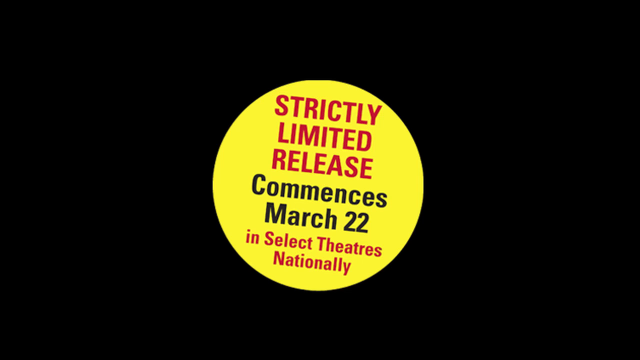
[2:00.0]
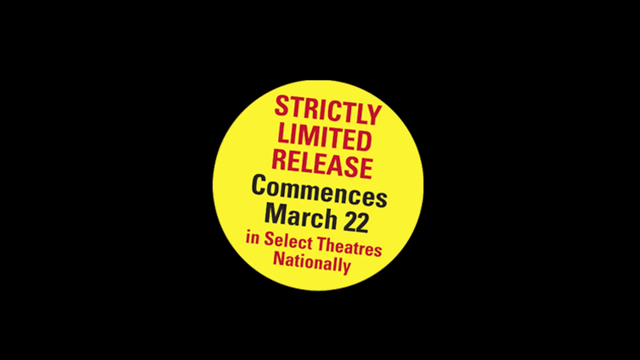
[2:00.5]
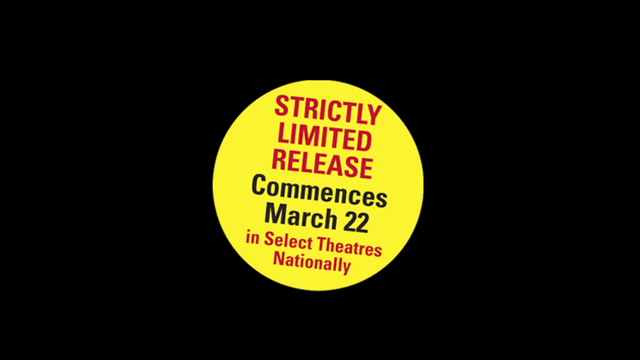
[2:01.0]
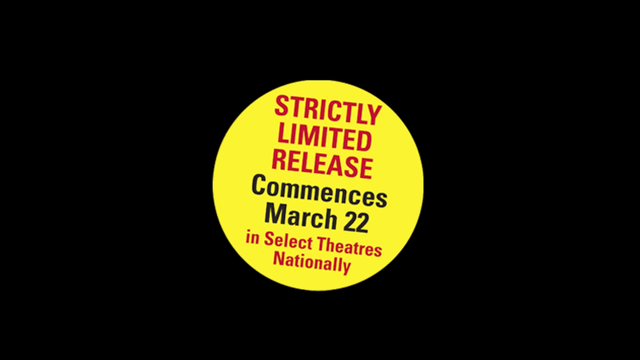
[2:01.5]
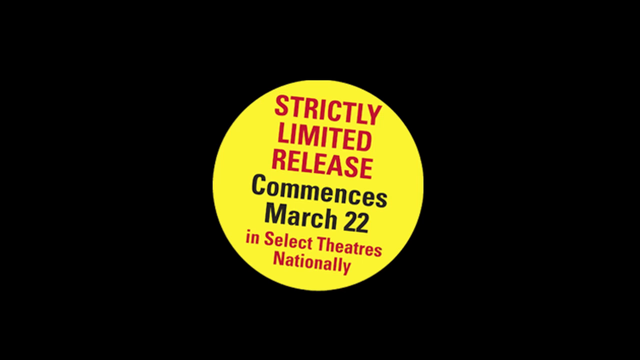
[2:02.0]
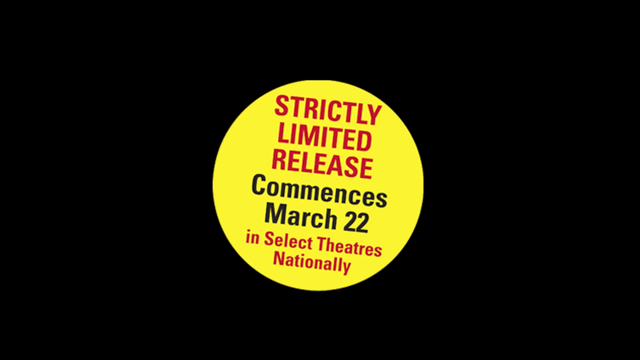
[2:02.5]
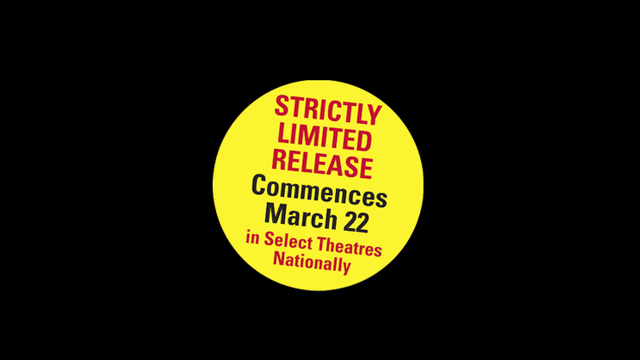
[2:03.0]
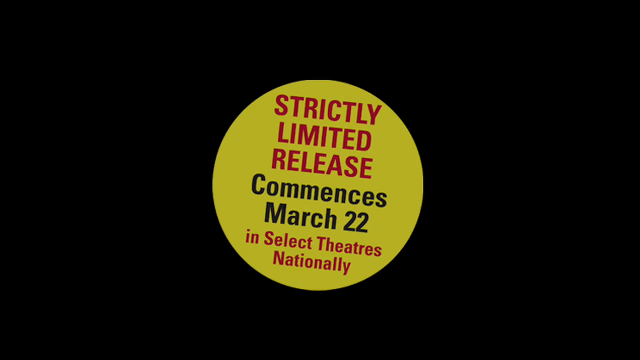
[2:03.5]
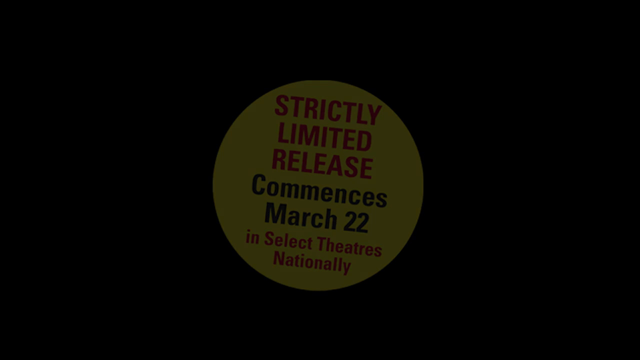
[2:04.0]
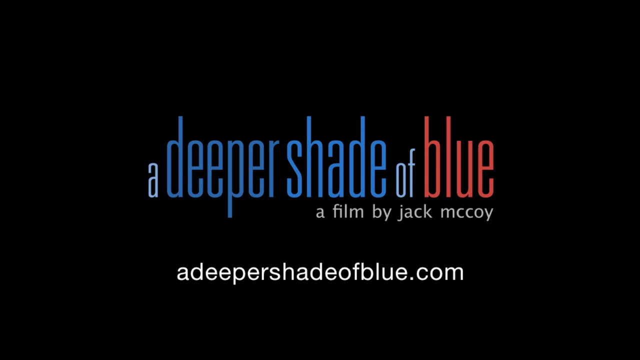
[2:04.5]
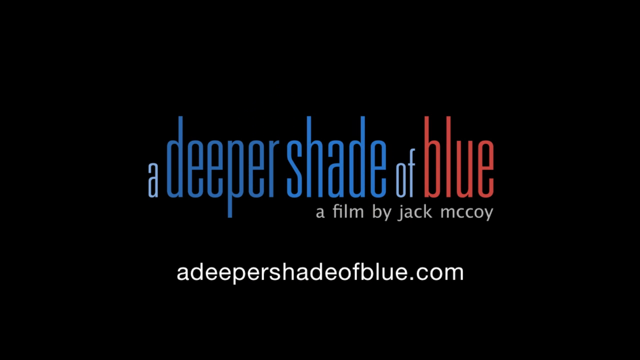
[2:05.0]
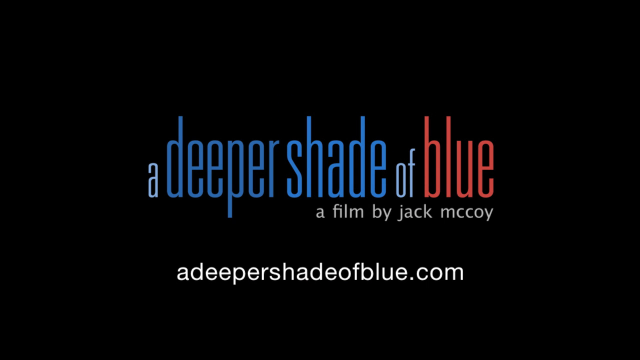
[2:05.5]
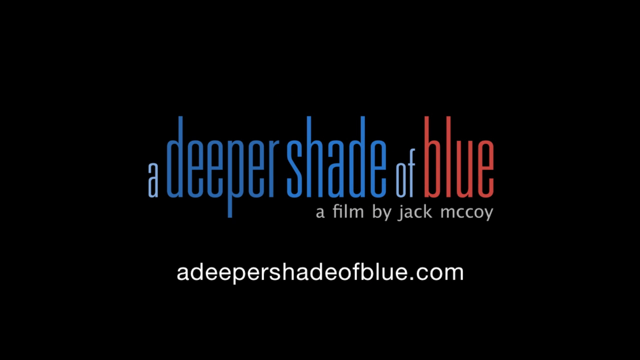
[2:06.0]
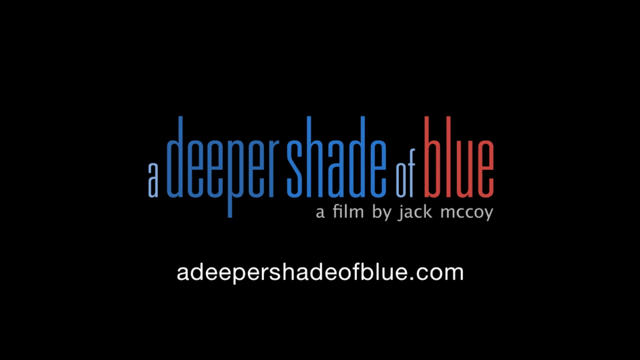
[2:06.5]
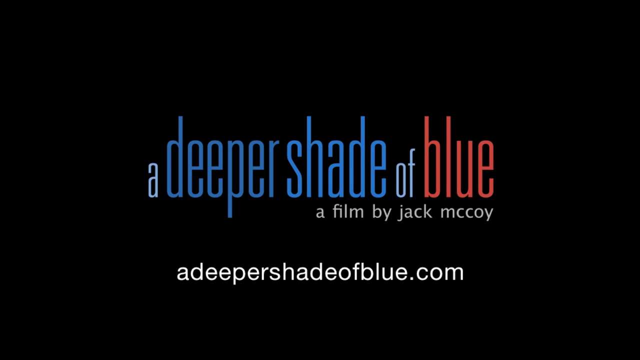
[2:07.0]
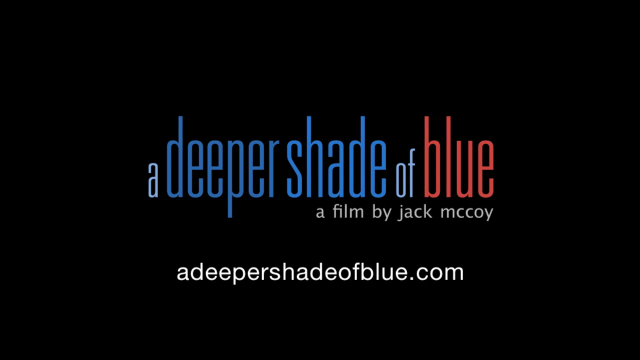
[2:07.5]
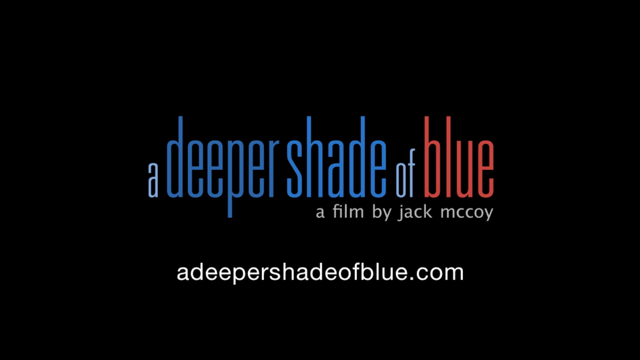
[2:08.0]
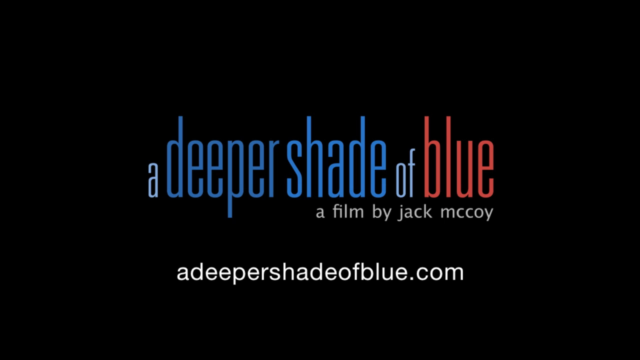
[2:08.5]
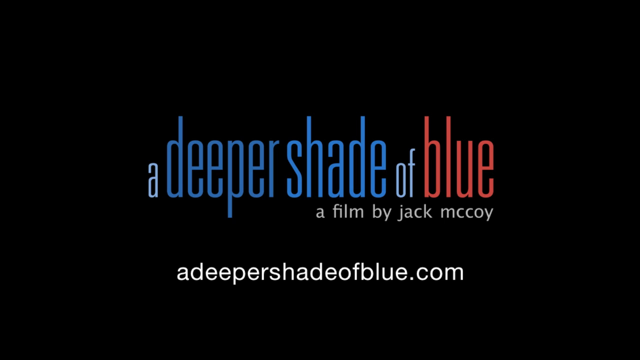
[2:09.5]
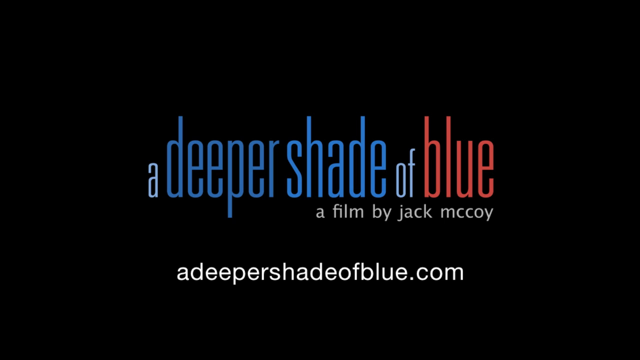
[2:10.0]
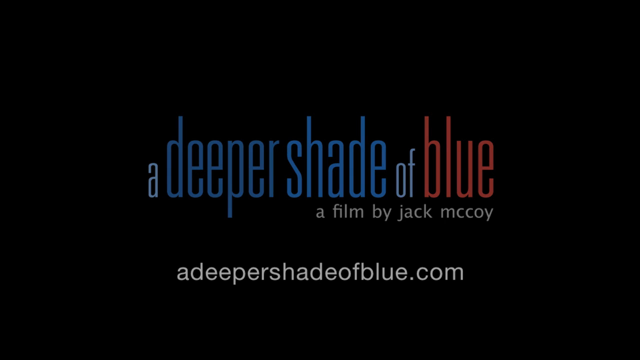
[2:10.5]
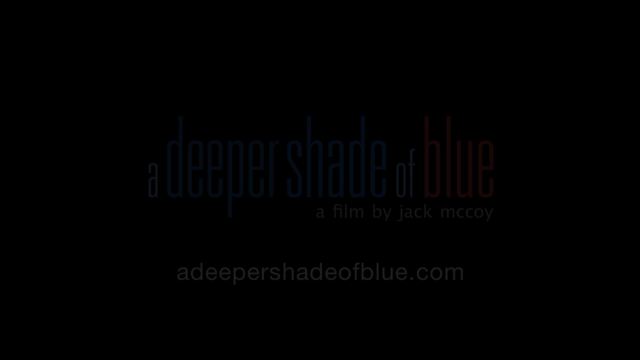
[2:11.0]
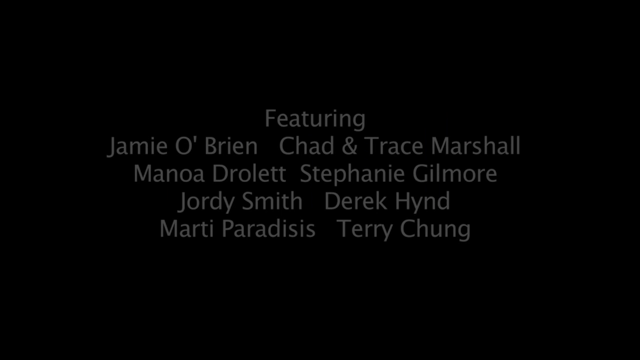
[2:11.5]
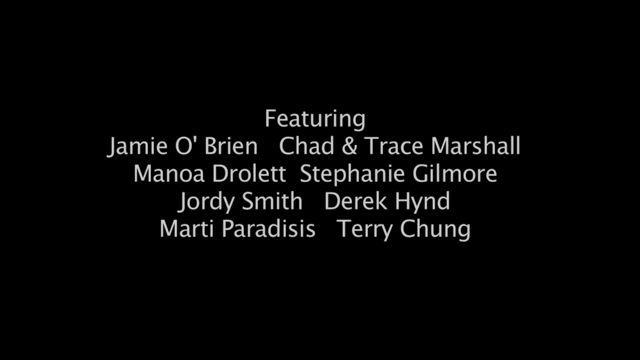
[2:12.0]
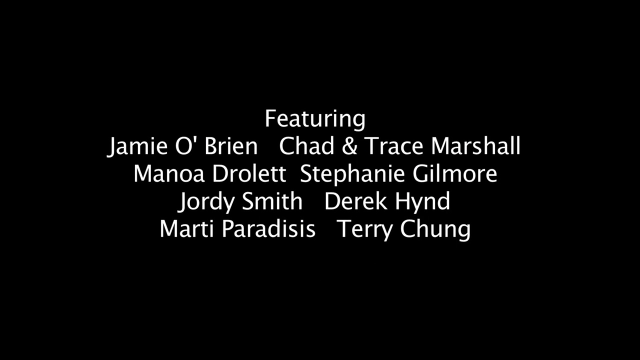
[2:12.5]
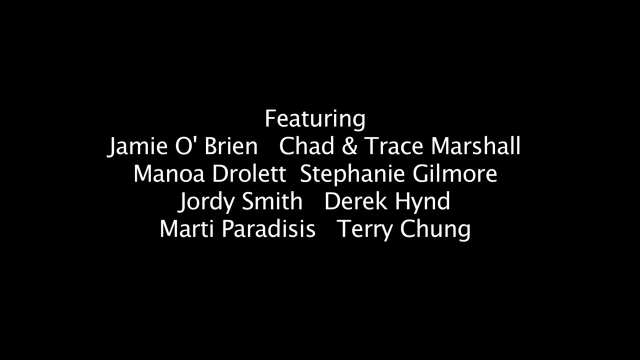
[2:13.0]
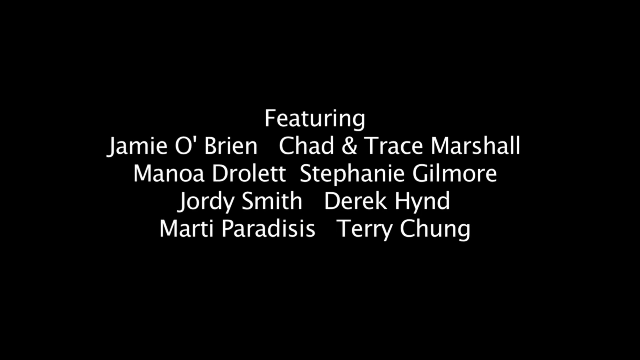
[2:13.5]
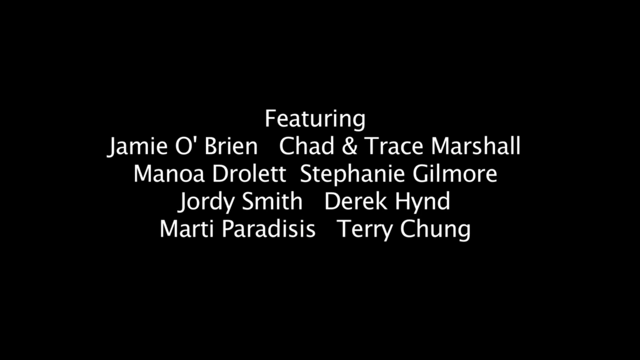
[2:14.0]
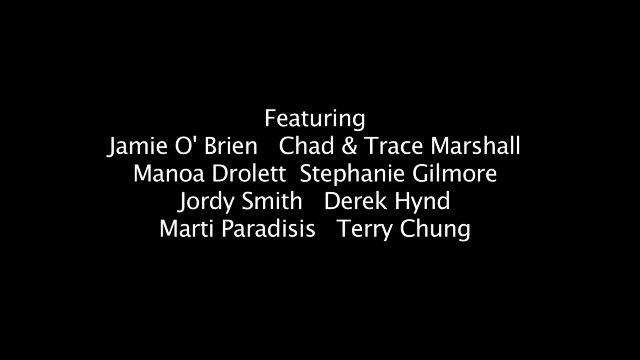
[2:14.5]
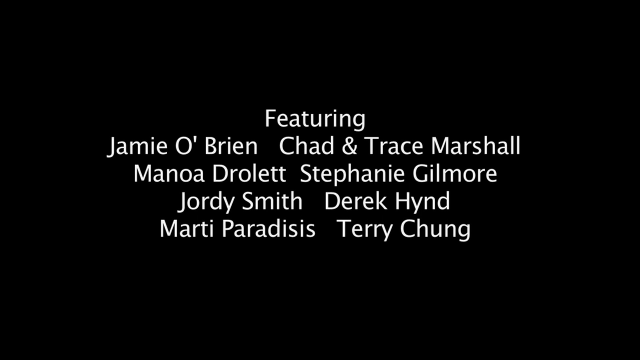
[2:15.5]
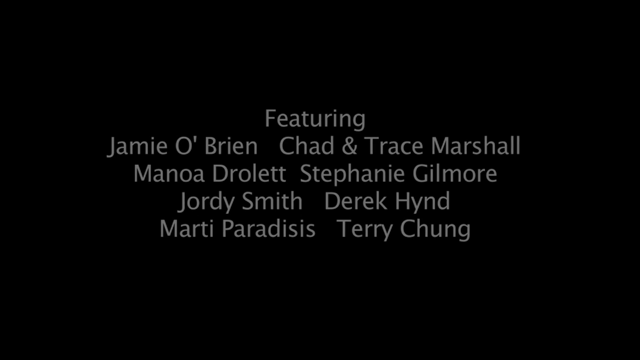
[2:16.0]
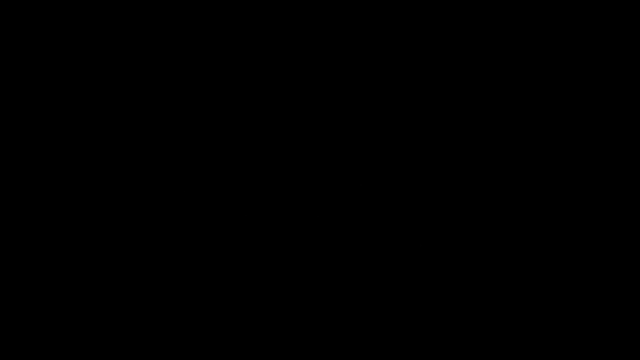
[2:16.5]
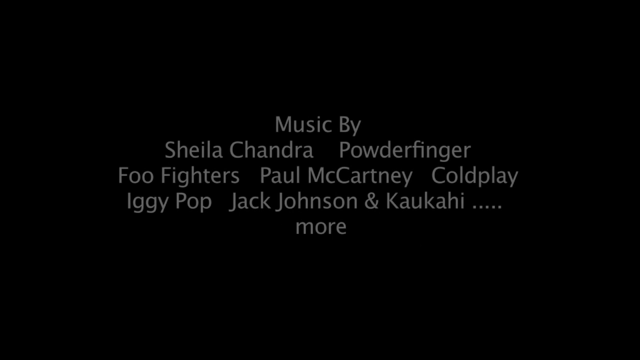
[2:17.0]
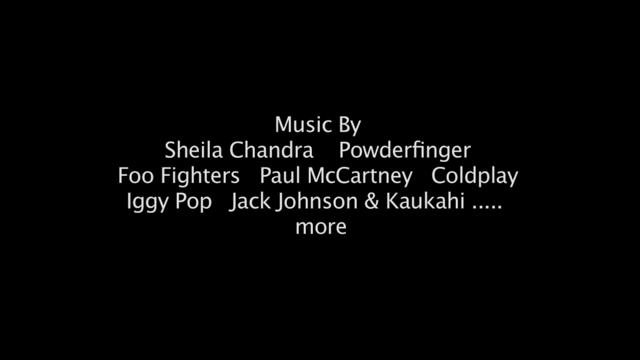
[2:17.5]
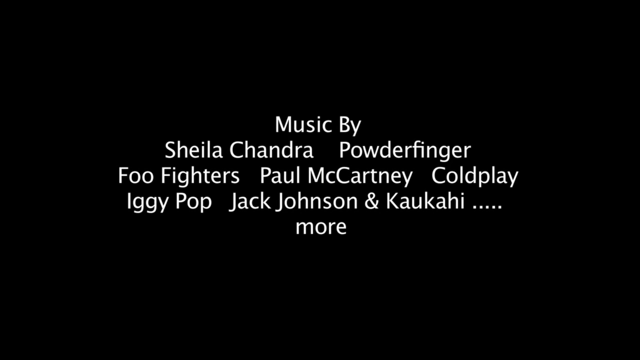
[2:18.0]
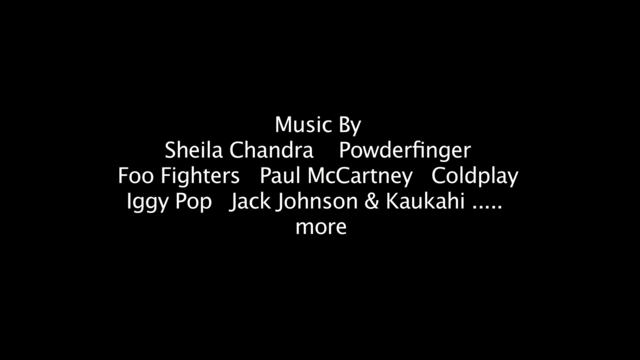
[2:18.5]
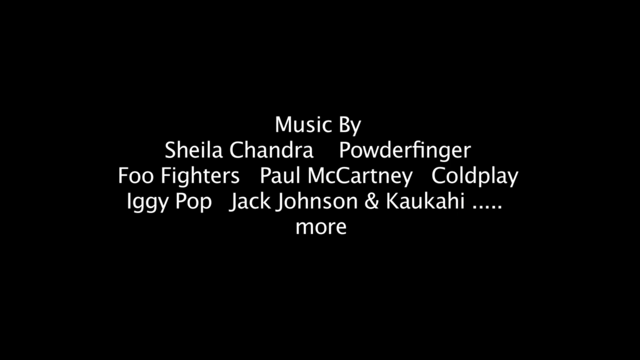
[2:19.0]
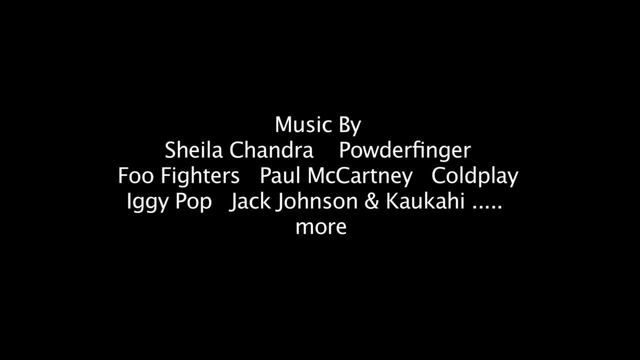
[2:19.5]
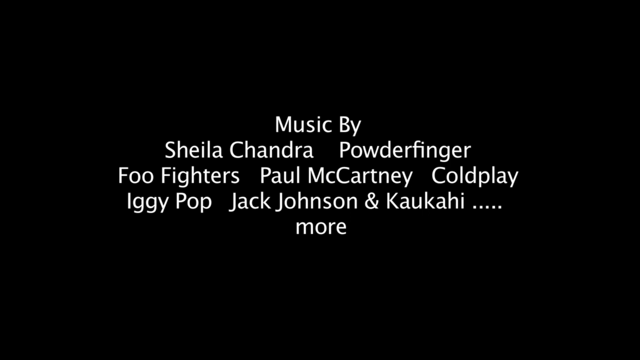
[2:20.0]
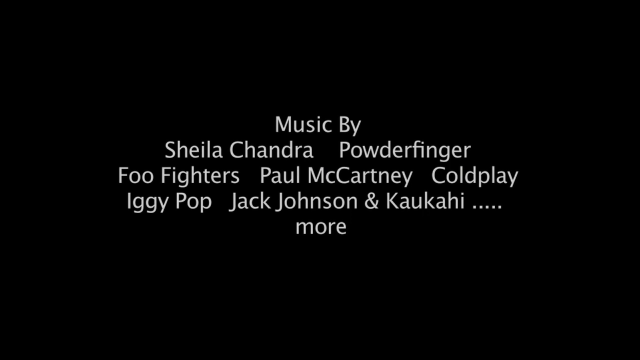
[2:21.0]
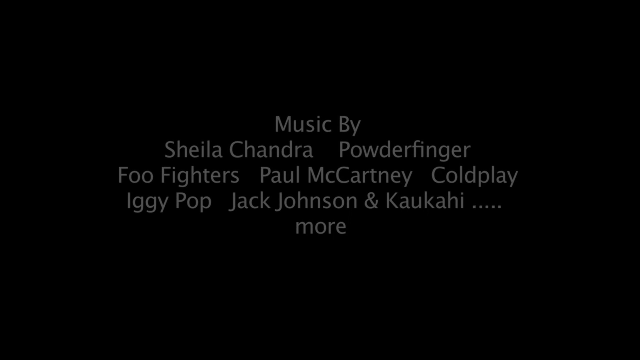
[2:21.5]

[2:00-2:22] A yellow circle, on a slight angle of maybe five or 10 degrees to the right, reads "strictly limited release" in red, "commences March 22nd" in black and "in select theatres nationally" in red. This fades away and the film's name appears: "A Deeper Shade of Blue, a film by Jack McCoy", with "deeper shade" in blue and "blue" in red, and a website at the bottom reading "adeepershadeofblue.com". The video lingers on this title, then credits appear: featuring Jamie O'Brien, Chad Antrace-Marshall, Manoha Drolet, Stephanie Gilmore, Jordie Smith, Derek Hoind, Marty Paradisis and Terry Chung, and music by Sheila Chandra, Powderfinger, Foo Fighters, Paul McCartney, Coldplay, Iggy Pop, Jack Johnson, Kakakawe and more.